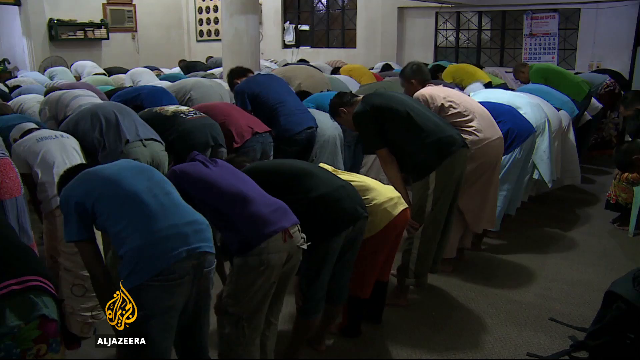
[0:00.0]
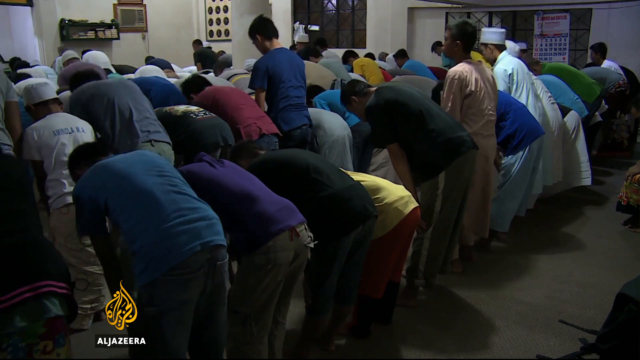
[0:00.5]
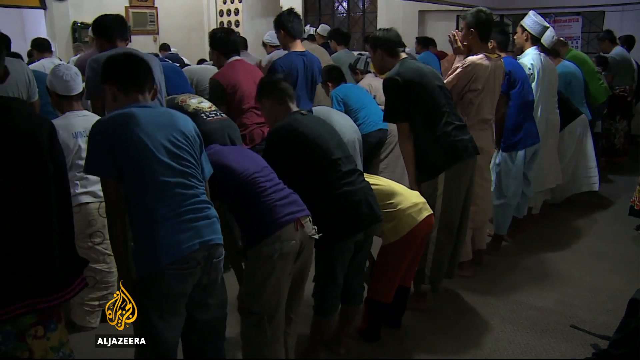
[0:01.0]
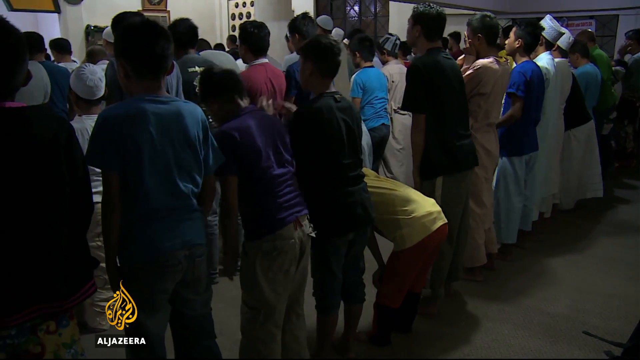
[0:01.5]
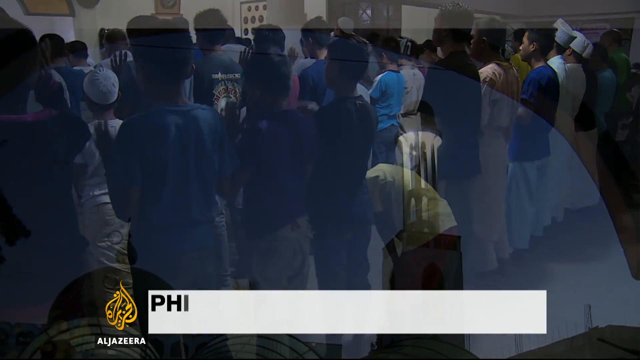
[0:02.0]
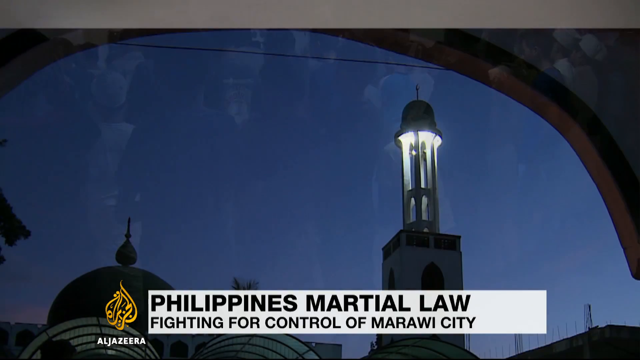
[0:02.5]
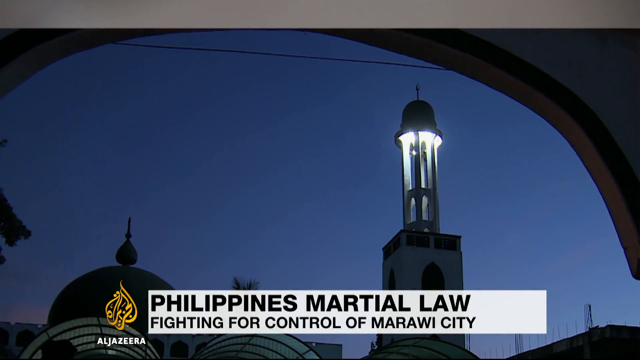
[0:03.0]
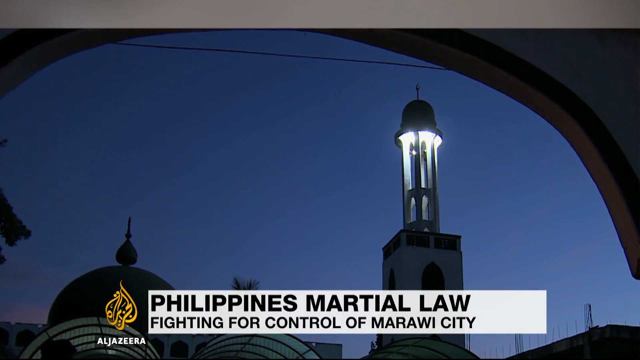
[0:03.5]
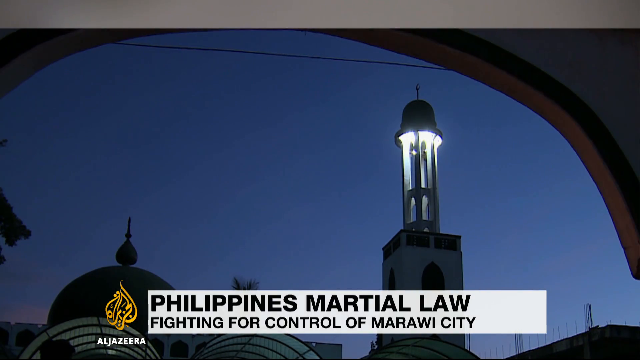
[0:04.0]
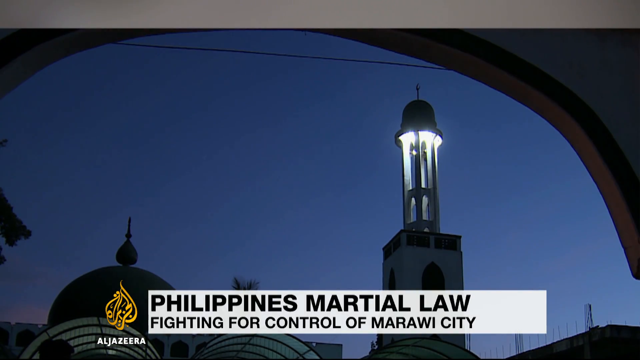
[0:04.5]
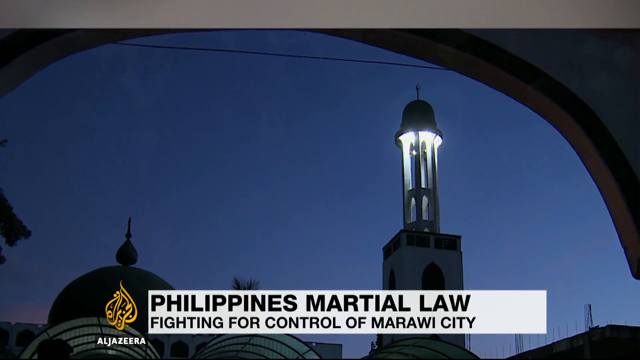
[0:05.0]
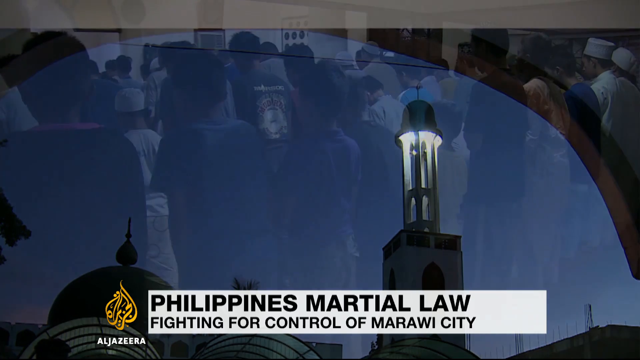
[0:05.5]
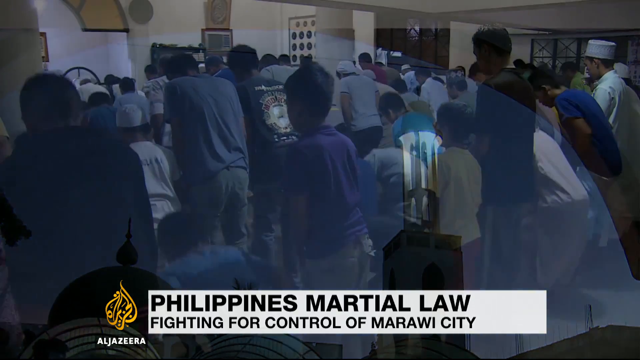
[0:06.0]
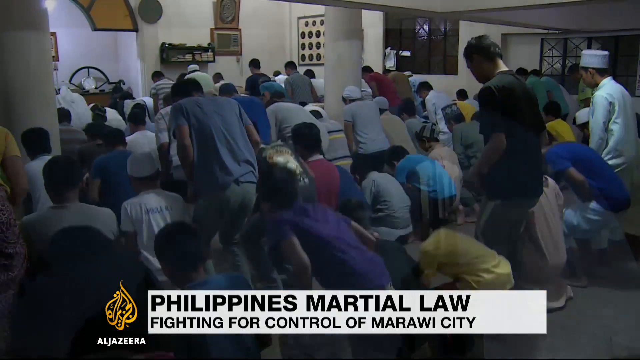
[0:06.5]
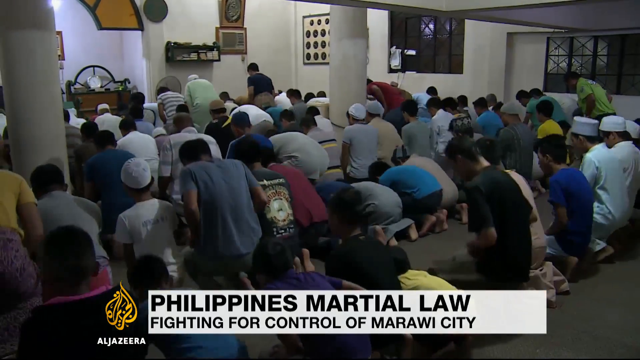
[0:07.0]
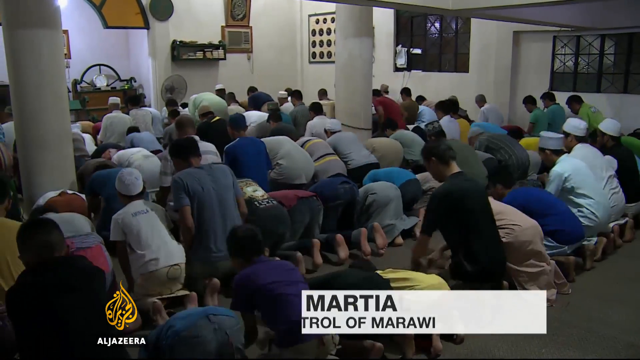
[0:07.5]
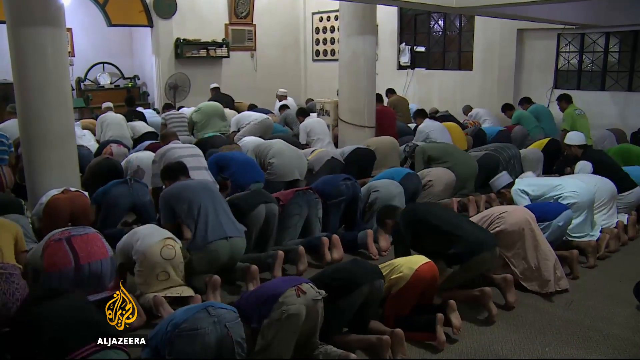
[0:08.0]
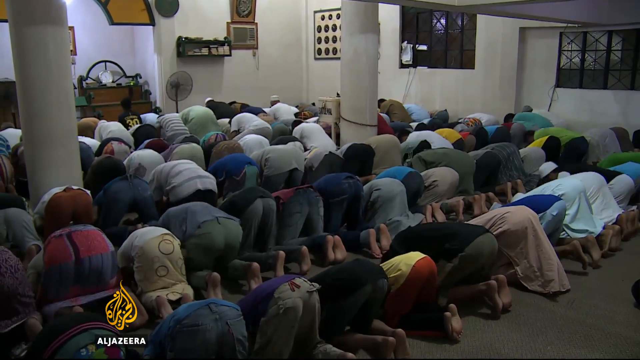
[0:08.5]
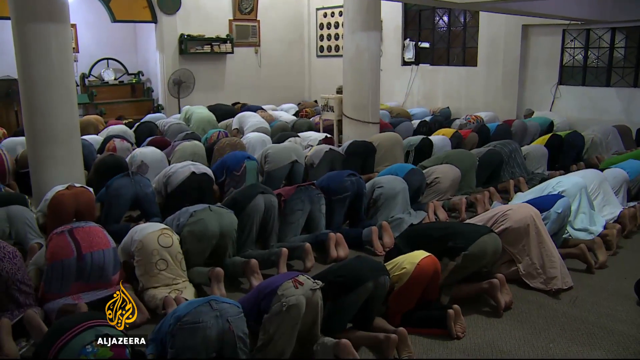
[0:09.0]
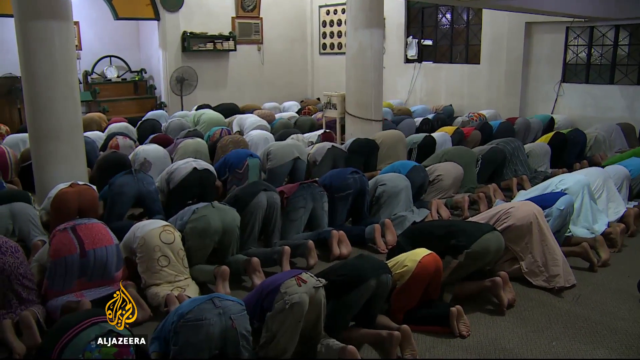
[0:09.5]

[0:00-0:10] What looks like an Al Jazeera news report opens with scenes inside a mosque. People are seen praying from behind, kneeling, with none of their faces visible. A caption reads "Philippines martial law fighting for control of Marawi city."